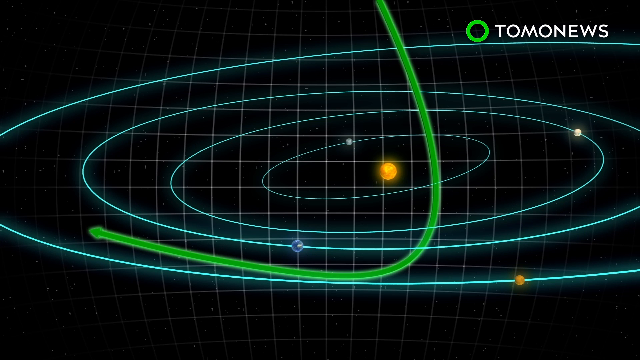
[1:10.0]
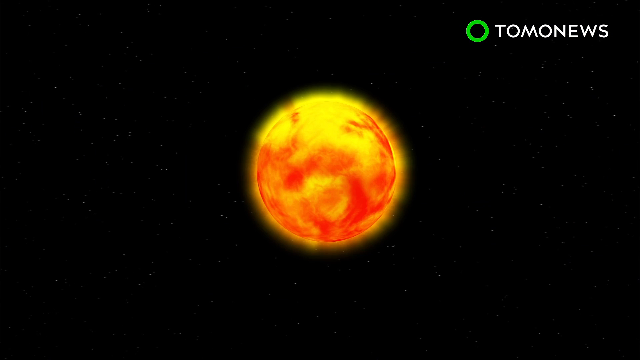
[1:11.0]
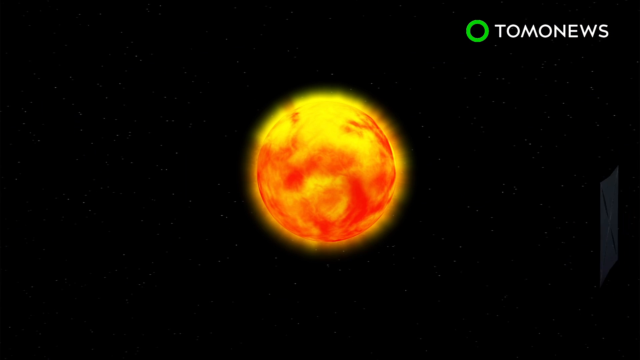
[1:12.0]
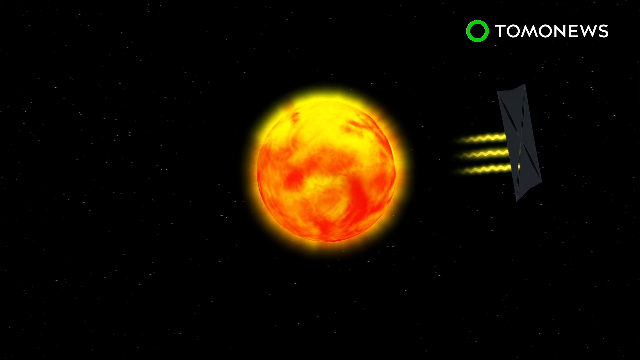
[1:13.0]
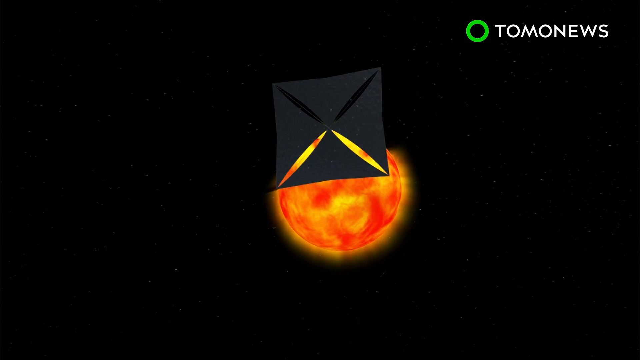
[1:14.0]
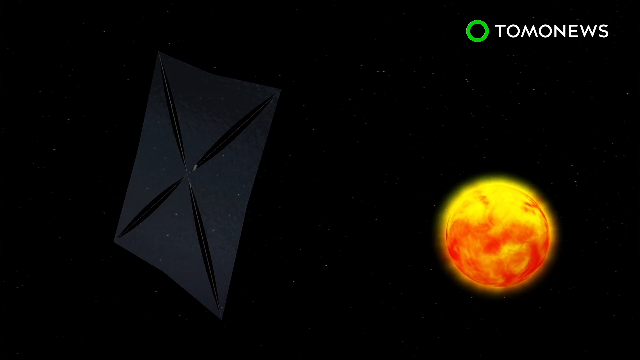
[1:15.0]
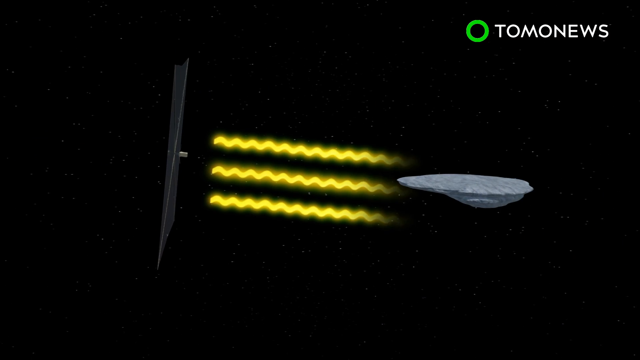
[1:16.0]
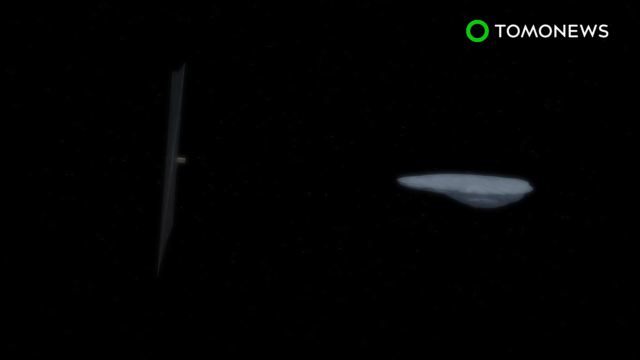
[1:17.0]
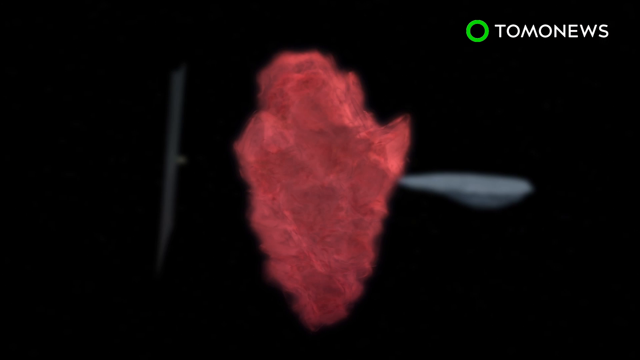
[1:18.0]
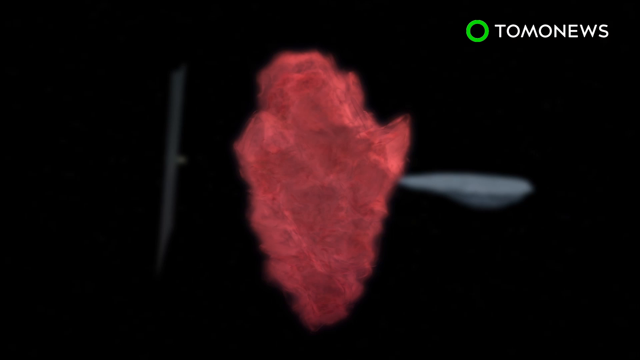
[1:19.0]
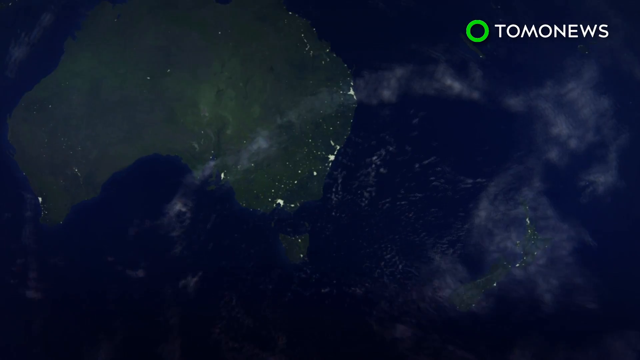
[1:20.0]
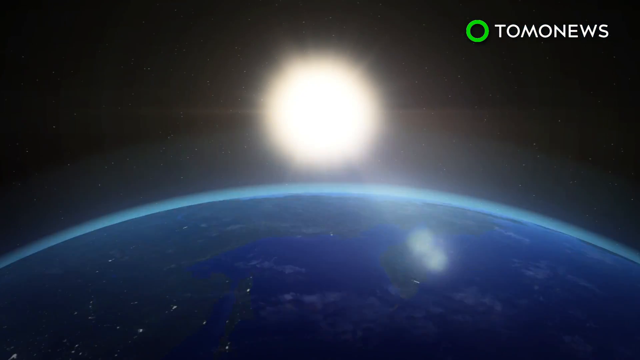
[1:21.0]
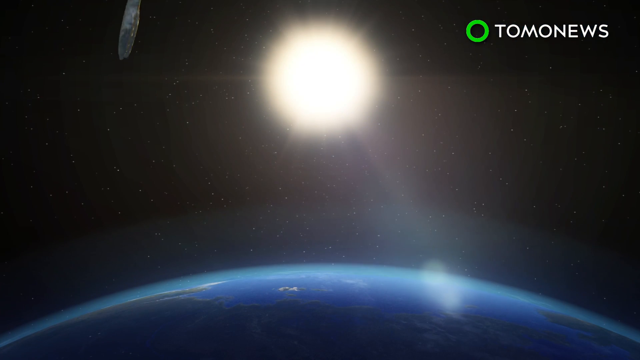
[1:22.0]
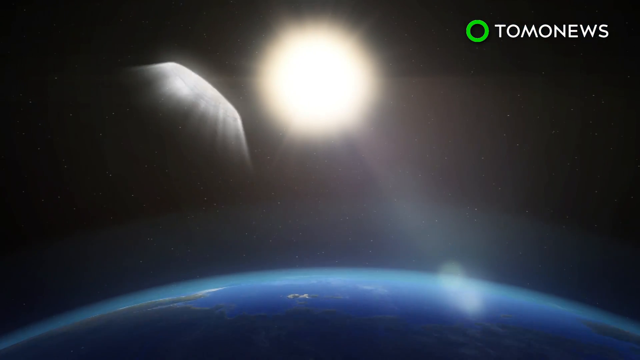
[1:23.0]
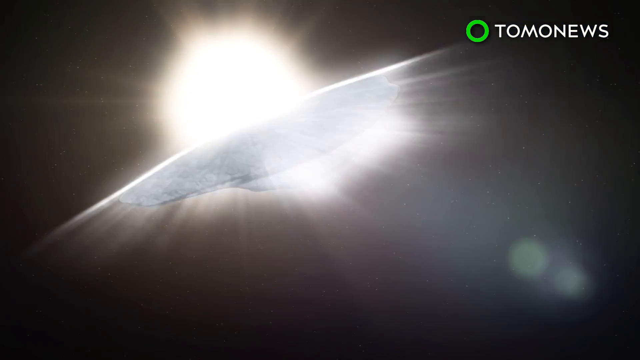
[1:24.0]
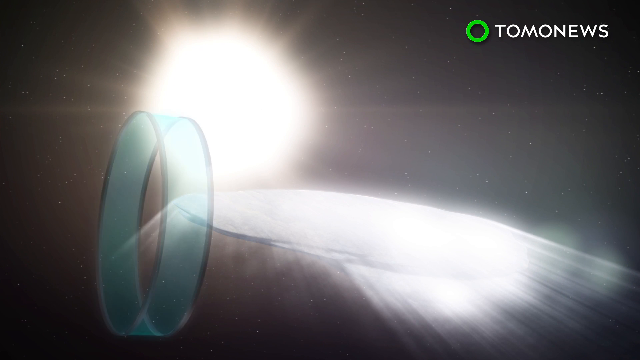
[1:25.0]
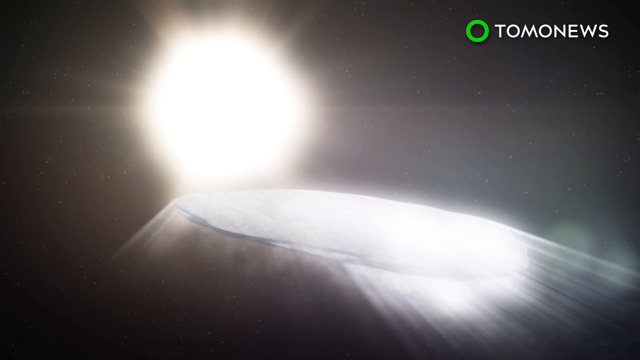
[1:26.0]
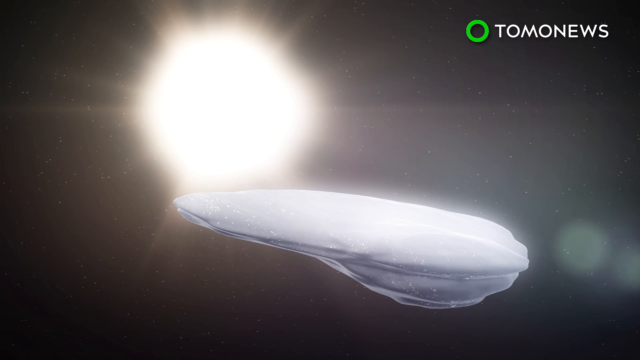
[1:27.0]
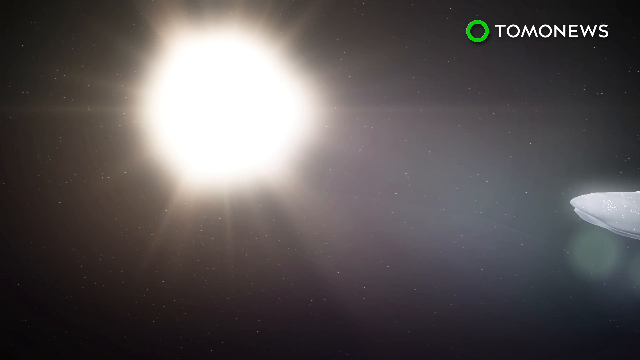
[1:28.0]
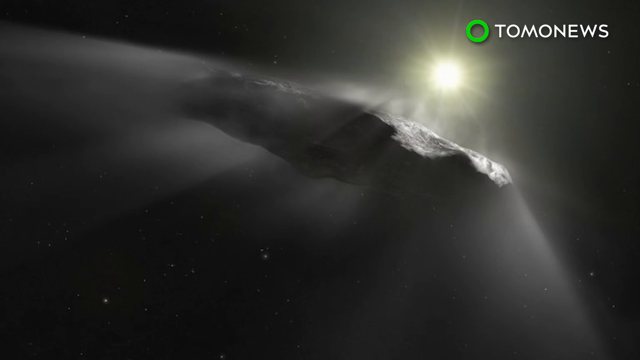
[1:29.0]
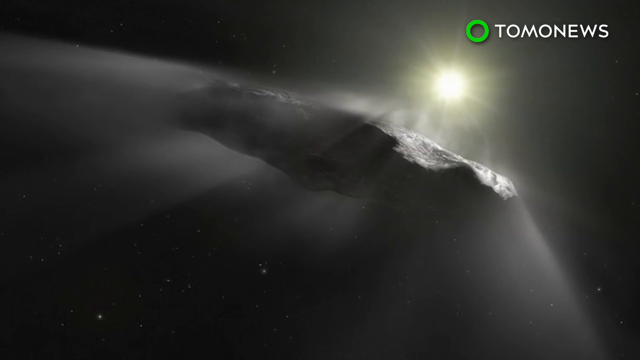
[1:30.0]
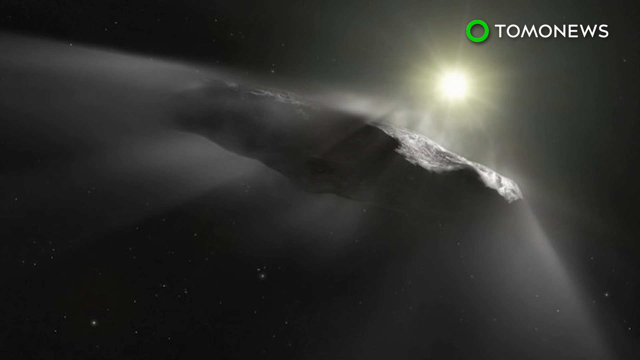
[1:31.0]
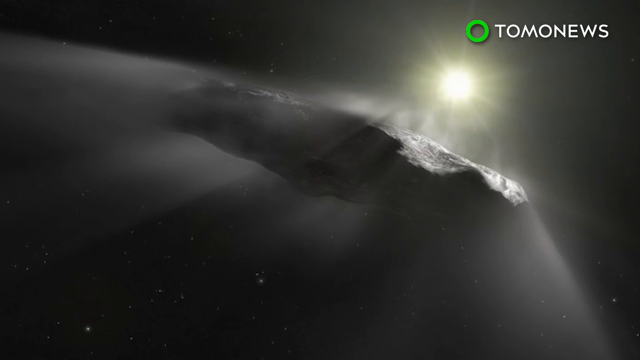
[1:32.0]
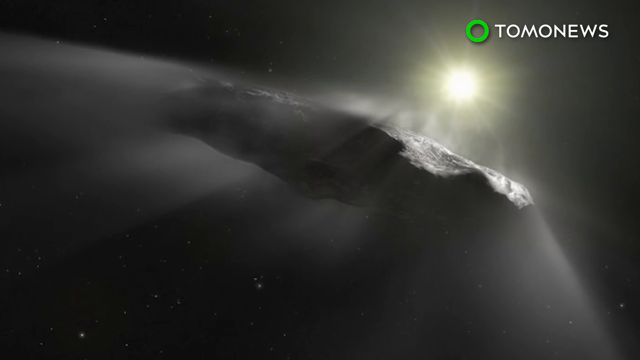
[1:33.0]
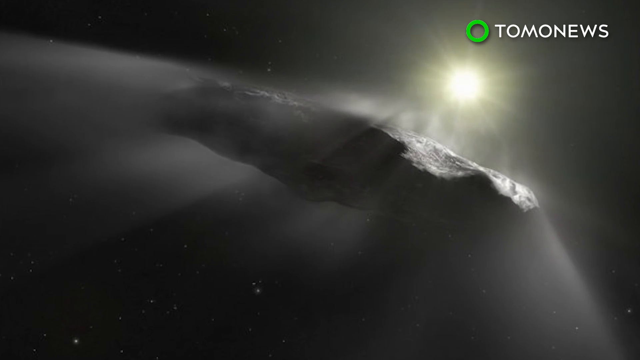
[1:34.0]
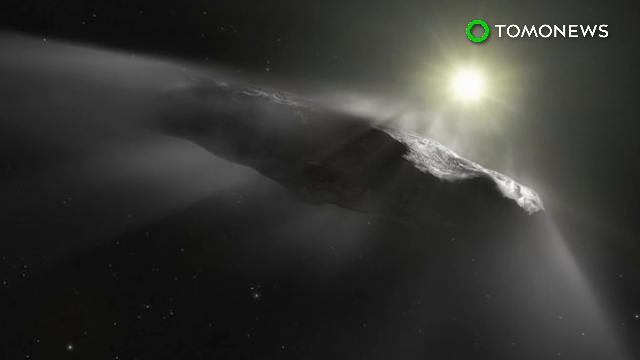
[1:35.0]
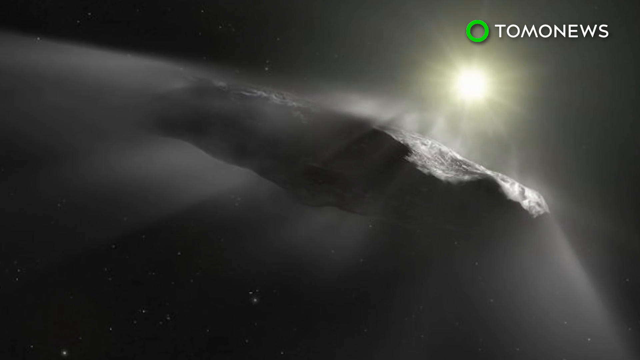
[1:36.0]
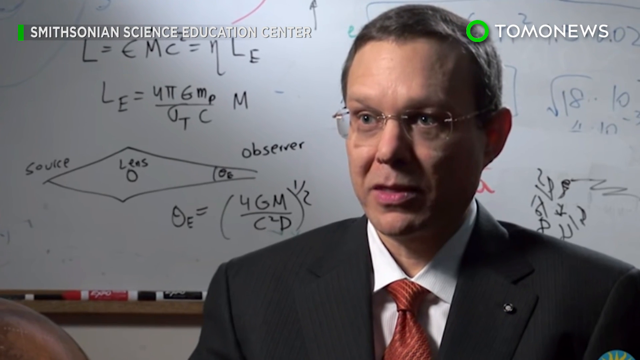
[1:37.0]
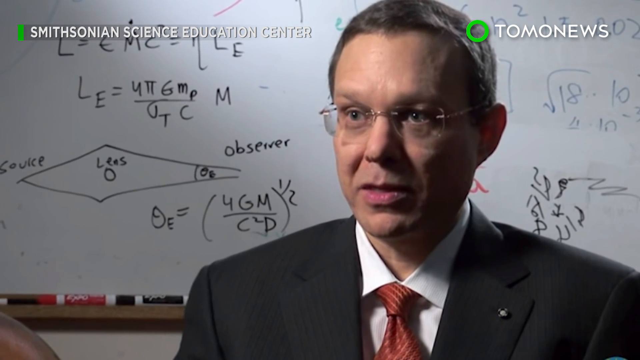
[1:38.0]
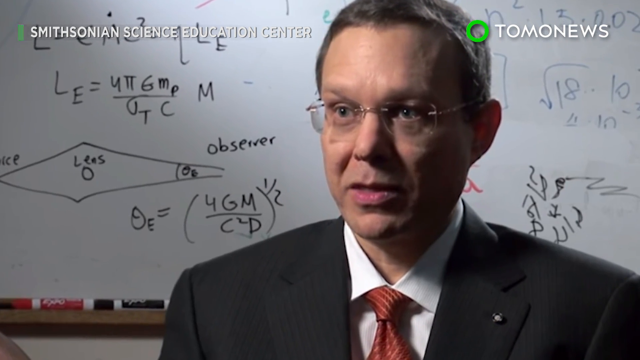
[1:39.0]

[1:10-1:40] The background is very dark black. Thinly glowing blue circle shapes appear, one circle inside another, forming apparently four of these circles, which look green. Several planets and the sun appear in space. The scene changes to a large orange glowing planet, kind of like the sun, in the middle of the frame. An object like a metal plate appears to its right and moves from right to left; the camera follows the metal plate, which ends up on the left and shoots some type of yellowish waves at the large rock object to the right. Another object, like red smoke, appears in front of the camera. The scene changes to show the earth with the large object above it, spinning clockwise, and then the object moves to the right. In another scene, the large object is flying through the sky with the sun in the background, the sun kind of glowing on it and giving it a sort of smoky cloud look. The camera zooms in slowly before switching to a still photo of a man with a white skin tone, wearing glasses, with short brown hair, a black jacket, a white inner shirt and a red tie.